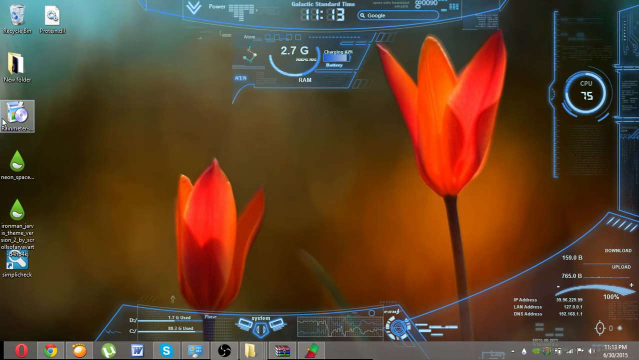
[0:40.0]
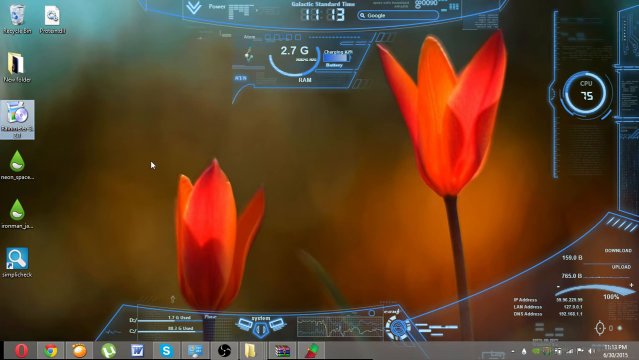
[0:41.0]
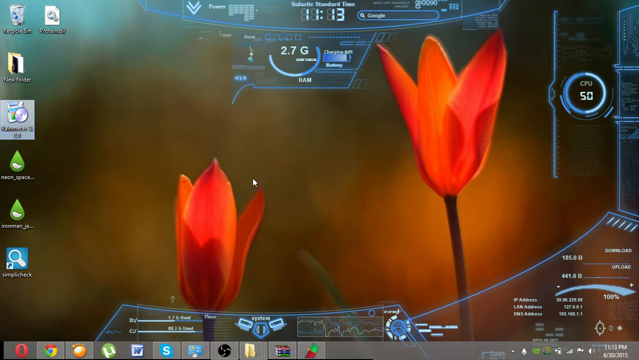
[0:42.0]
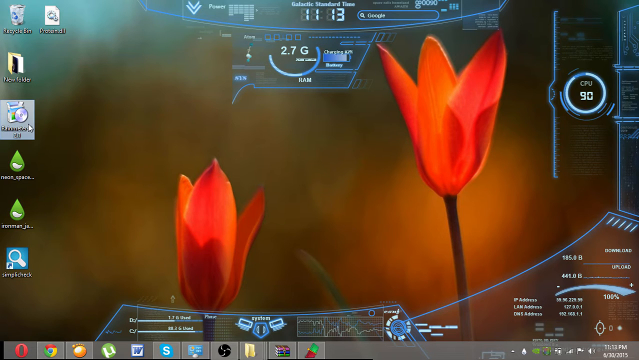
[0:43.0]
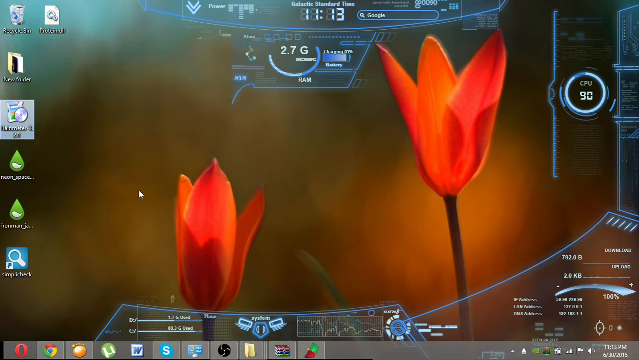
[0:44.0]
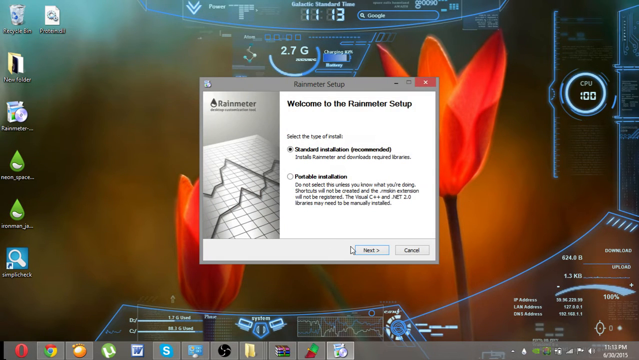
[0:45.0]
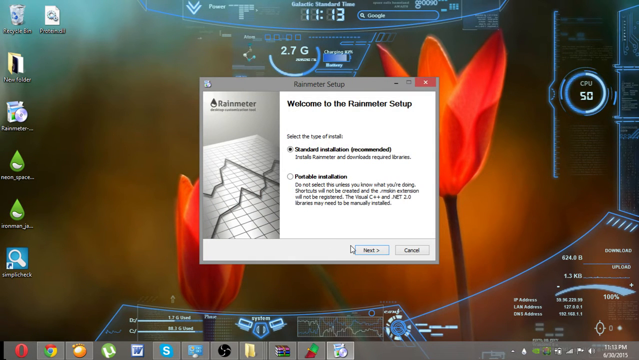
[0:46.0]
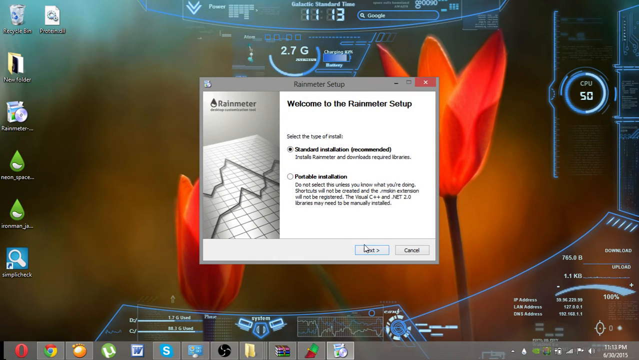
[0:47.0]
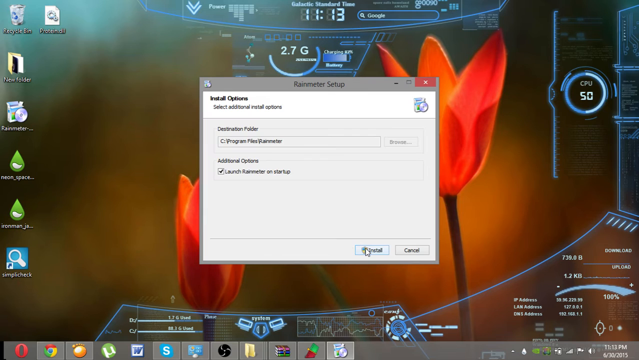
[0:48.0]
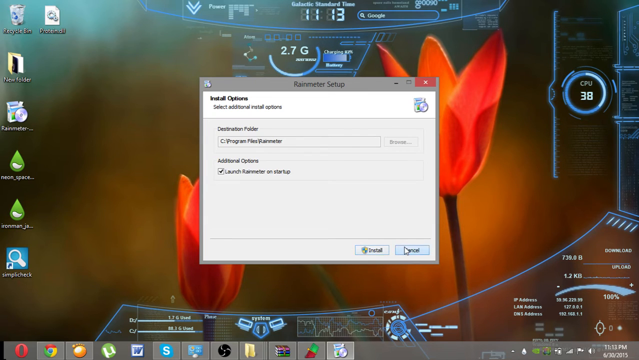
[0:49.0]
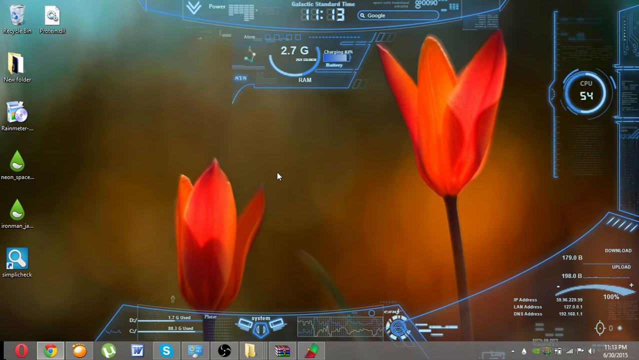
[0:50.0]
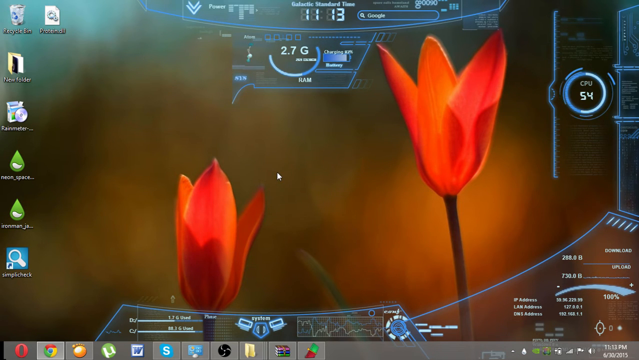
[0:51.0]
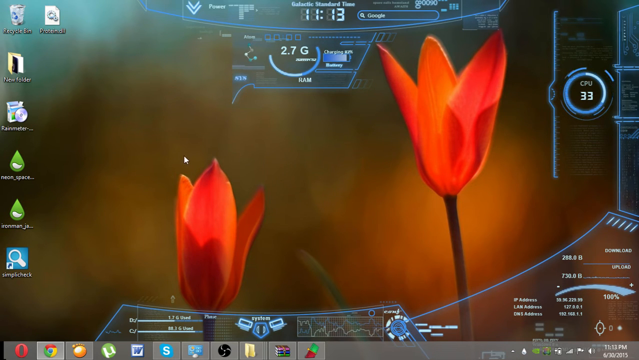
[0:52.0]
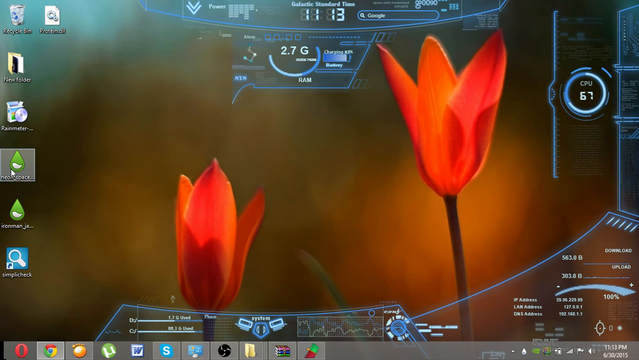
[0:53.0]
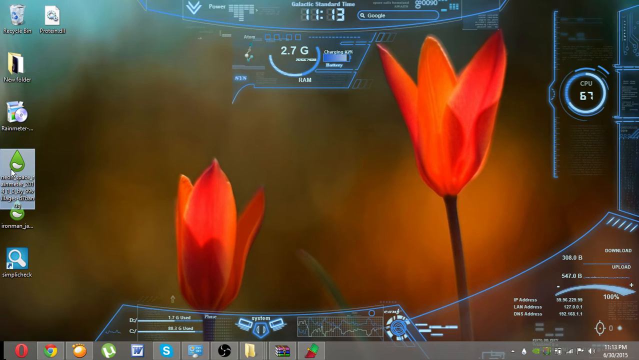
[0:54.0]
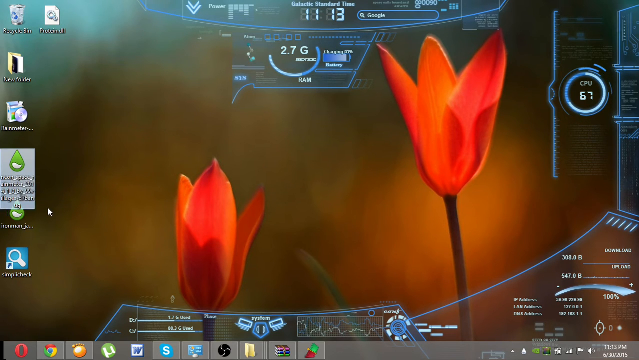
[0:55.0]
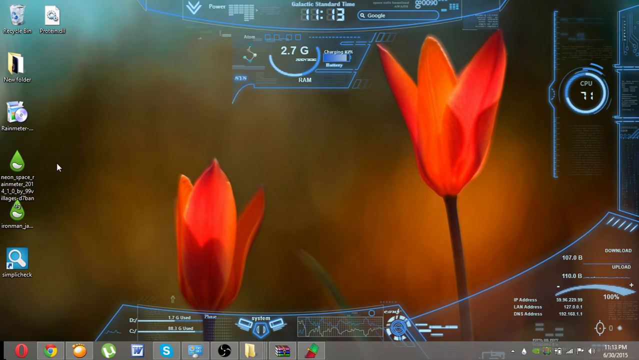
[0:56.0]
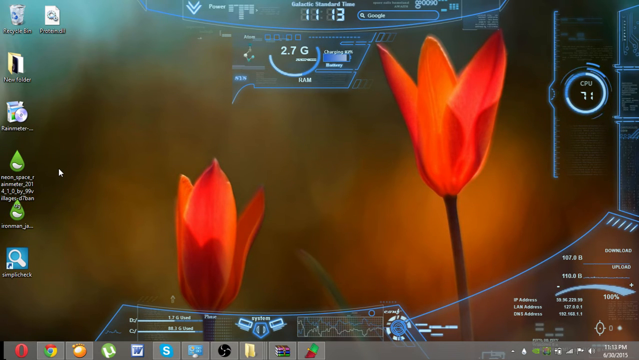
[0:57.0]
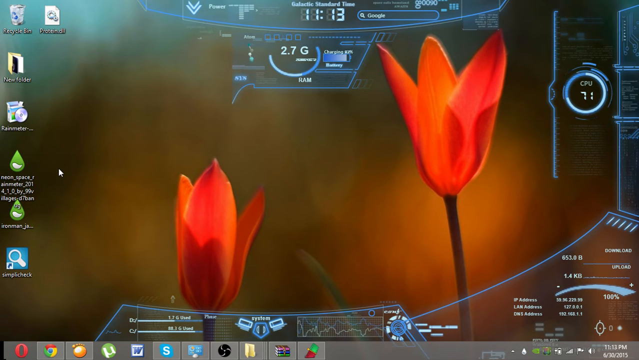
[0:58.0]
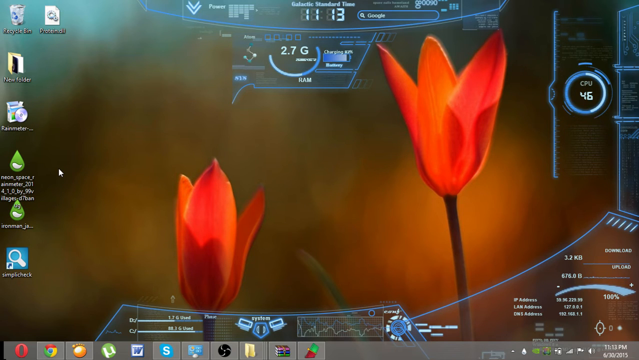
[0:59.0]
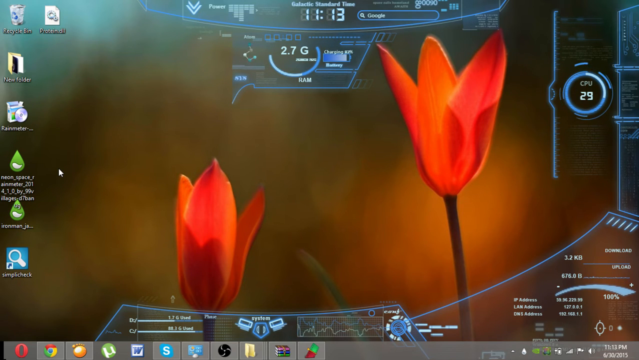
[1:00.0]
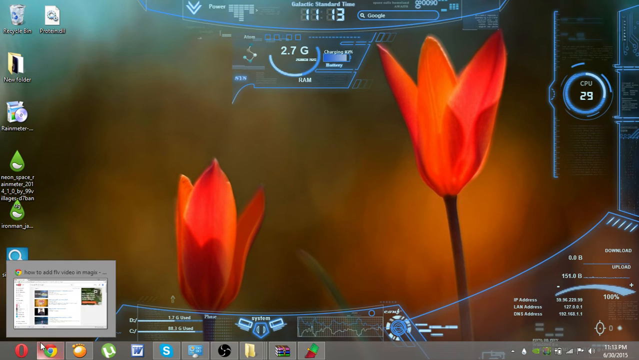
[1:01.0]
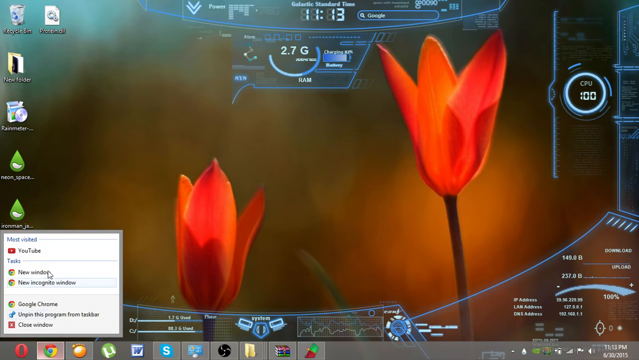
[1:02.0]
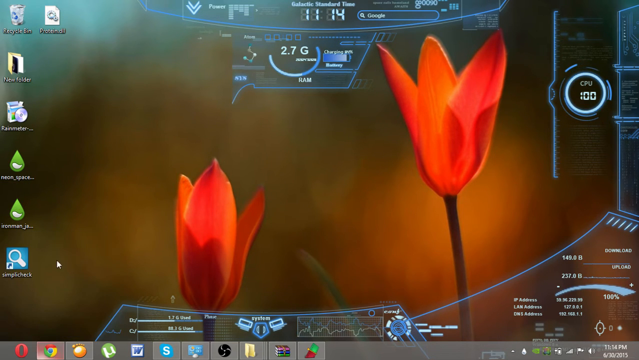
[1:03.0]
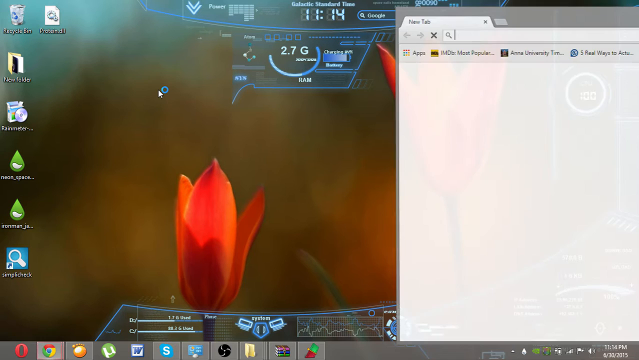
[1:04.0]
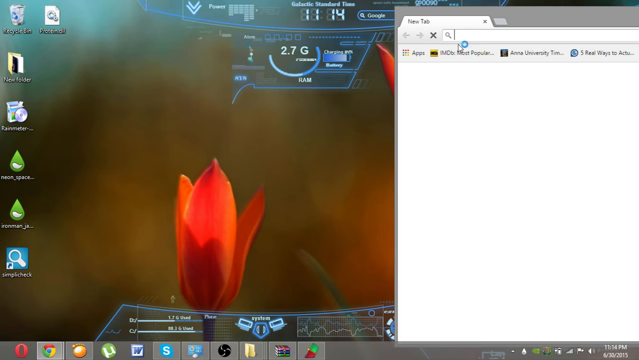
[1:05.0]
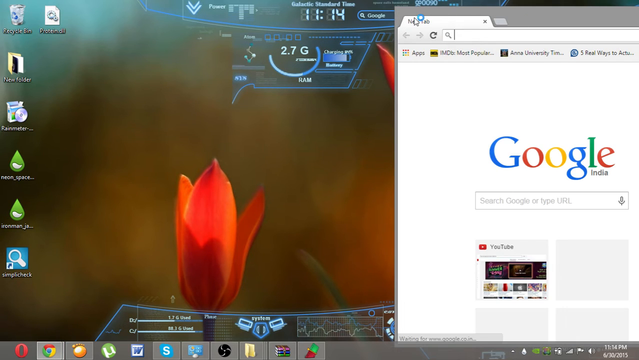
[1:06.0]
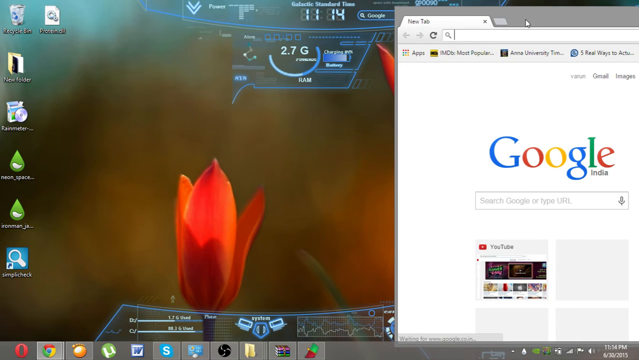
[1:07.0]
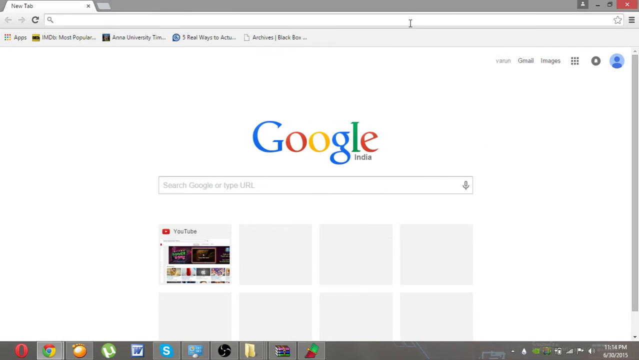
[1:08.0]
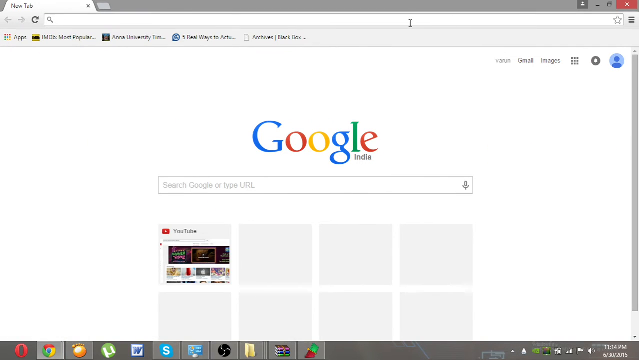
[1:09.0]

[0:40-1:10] On the desktop screen, an installer icon is currently selected, and the mouse cursor is in the center of the screen. The mouse moves over and hovers over the installer icon, clicks it, and an installation dialog box appears. Its title is "Rain Meter Setup", with the text "Welcome to the Rain Meter Setup", and it invites the user to select the type of installation: a standard installation, which is recommended, or a portable installation. The standard installation installs Rainmeter and downloads required libraries, while the portable installation option states not to select it unless you know what you're doing, that shortcuts will not be created and the RM-SKIN extension will not be registered, and that the Visual C++ and .NET 2.0 libraries may need to be manually installed. The user selects the standard installation and clicks next. This defaults to a destination folder of C Program Files, Rainmeter, with the option to launch Rainmeter on startup selected. The user then cancels out of the installer by clicking the cancel button on the dialog box and hovers over a green raindrop icon on the desktop that appears to be the Rainmeter executable. They then select Chrome from the taskbar and click new window, and a Chrome window appears on the right-hand side of the screen. They expand the Chrome window to fill the whole screen.